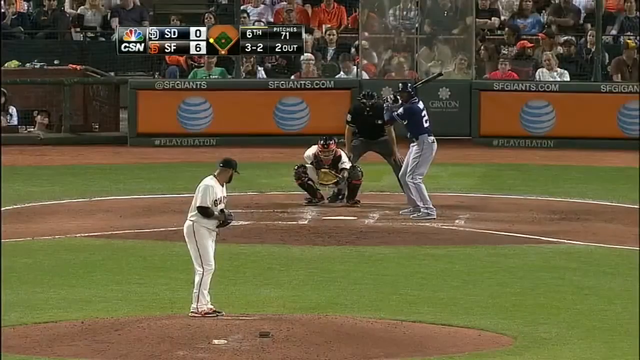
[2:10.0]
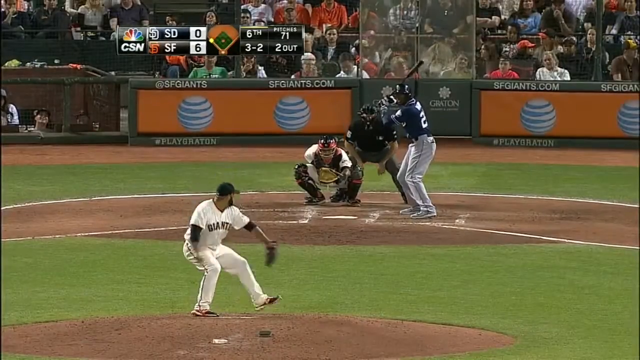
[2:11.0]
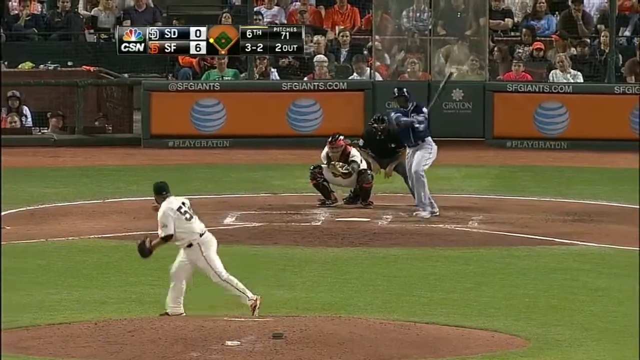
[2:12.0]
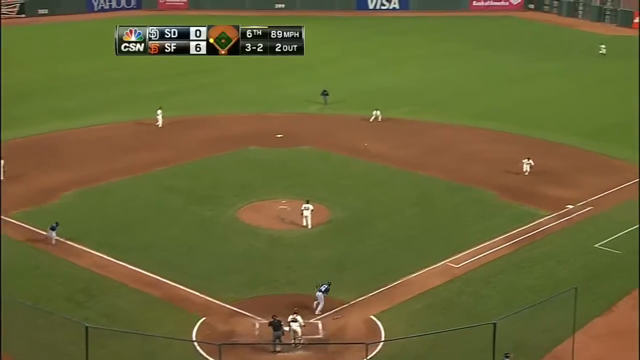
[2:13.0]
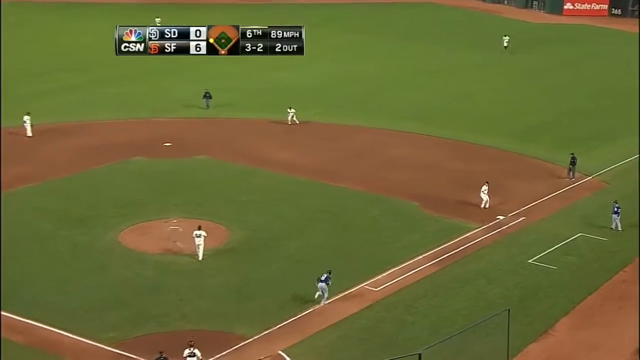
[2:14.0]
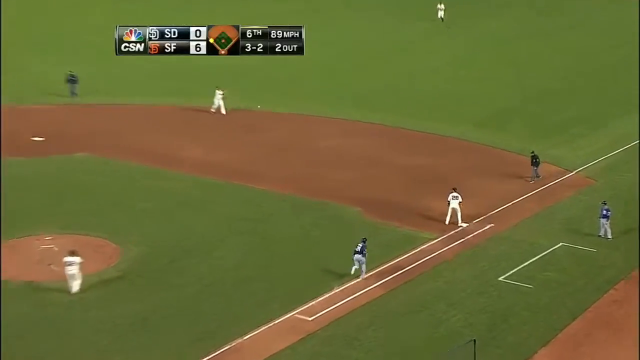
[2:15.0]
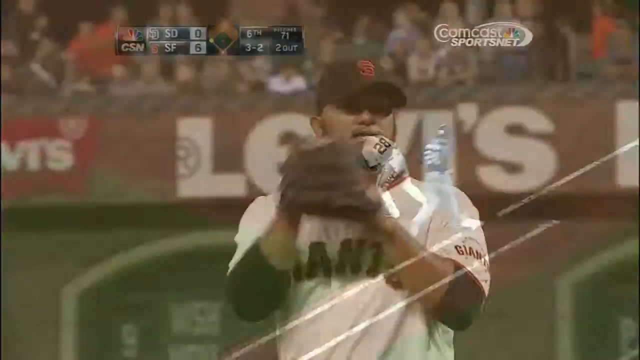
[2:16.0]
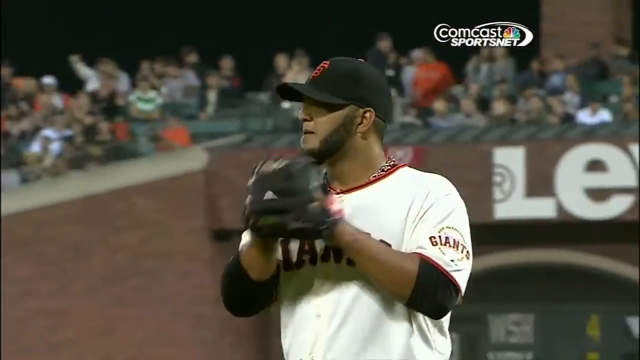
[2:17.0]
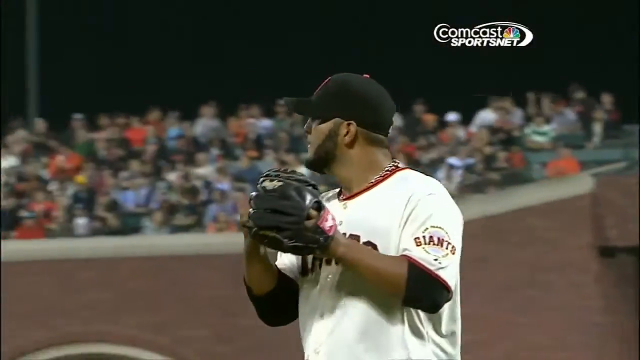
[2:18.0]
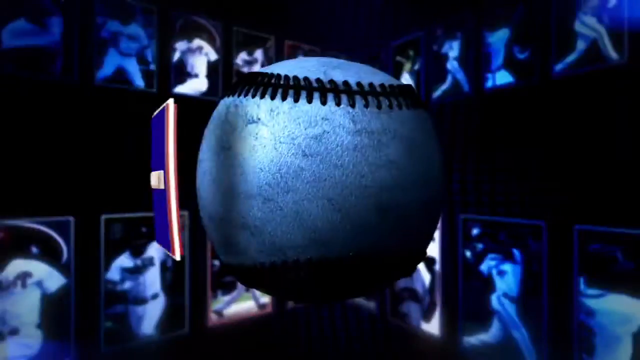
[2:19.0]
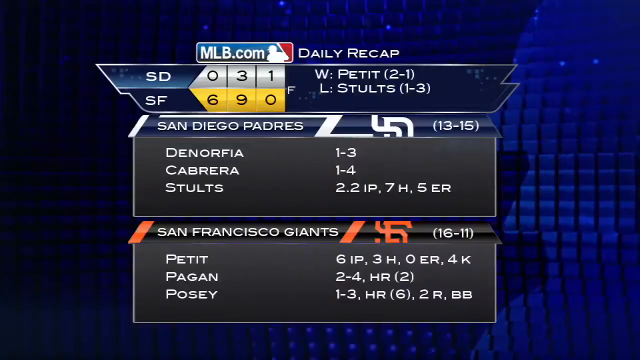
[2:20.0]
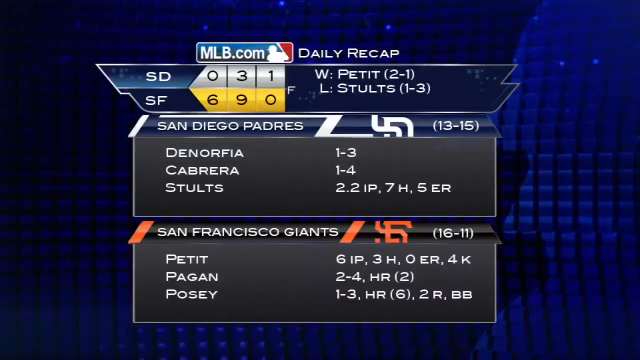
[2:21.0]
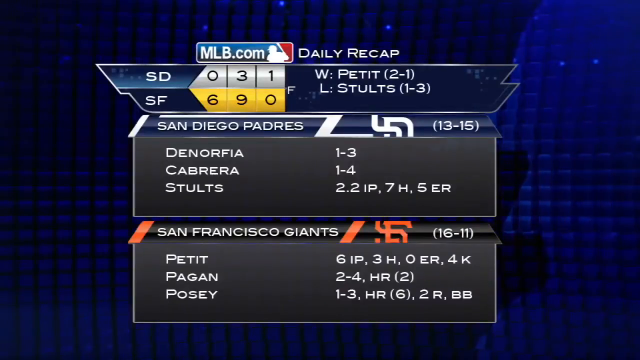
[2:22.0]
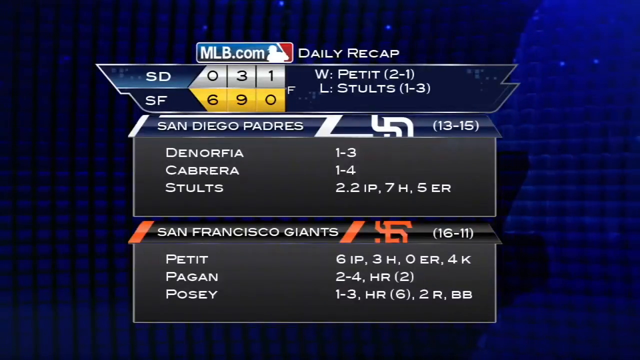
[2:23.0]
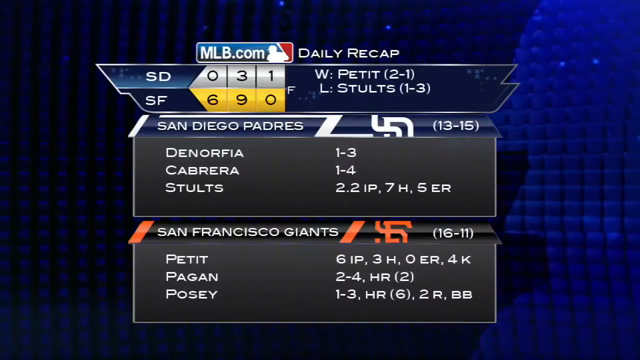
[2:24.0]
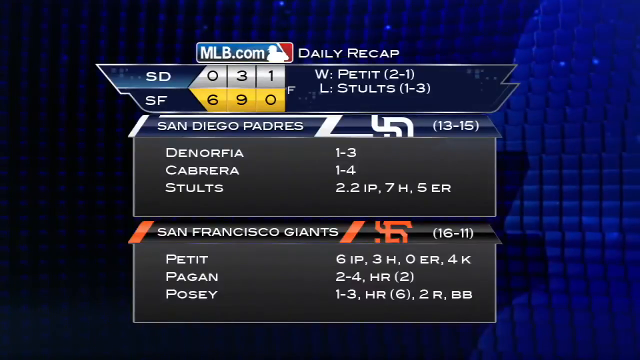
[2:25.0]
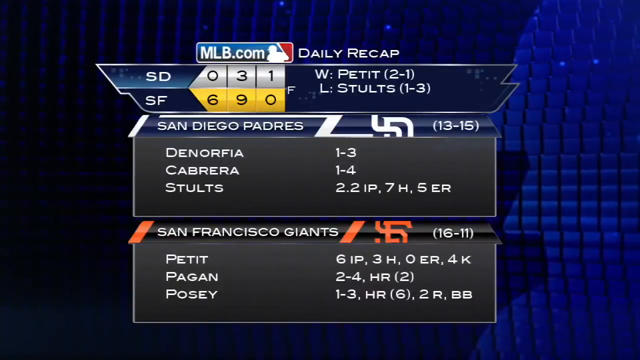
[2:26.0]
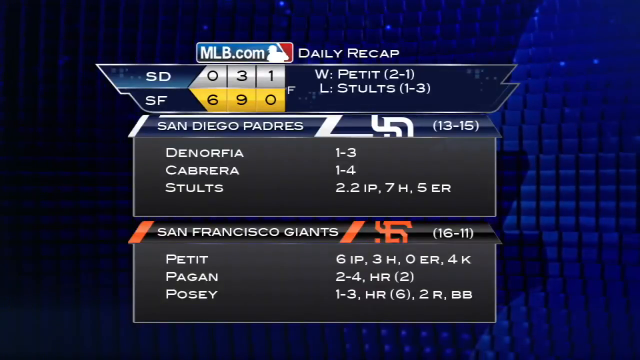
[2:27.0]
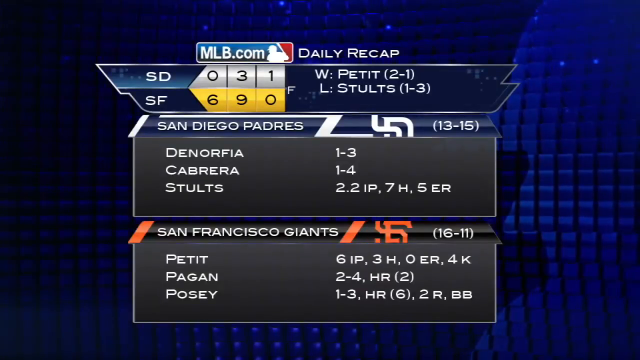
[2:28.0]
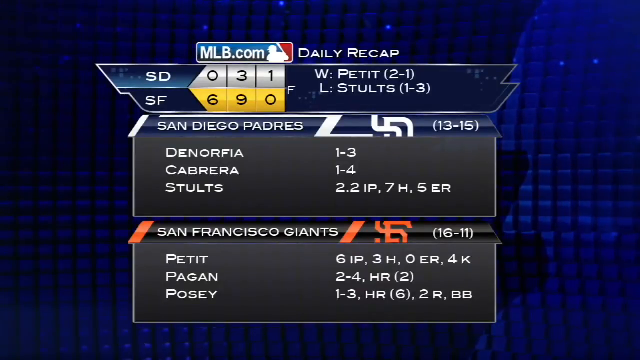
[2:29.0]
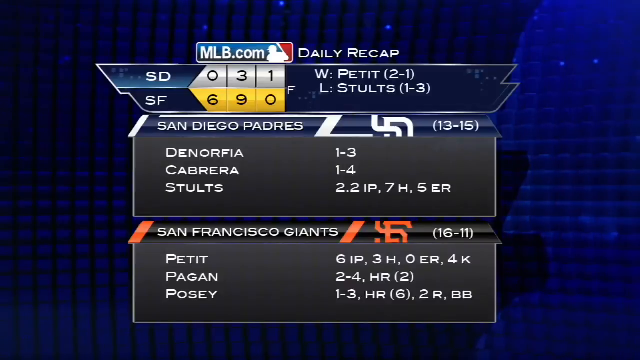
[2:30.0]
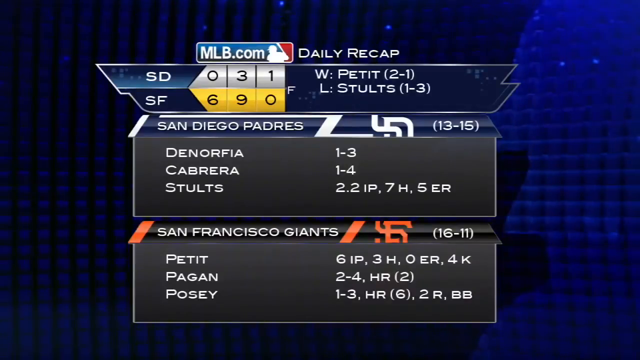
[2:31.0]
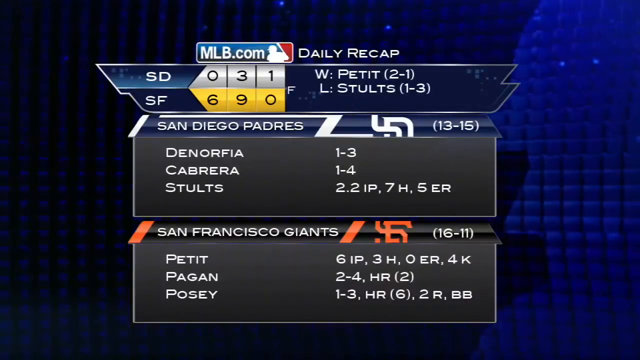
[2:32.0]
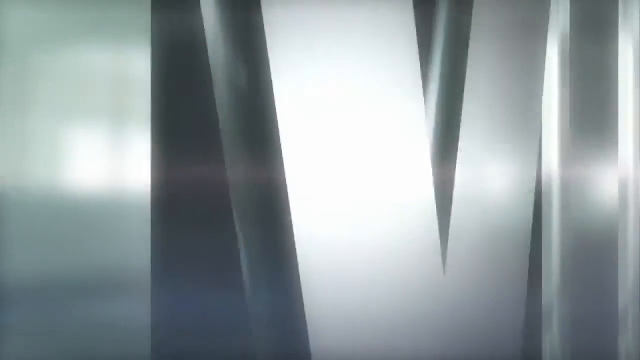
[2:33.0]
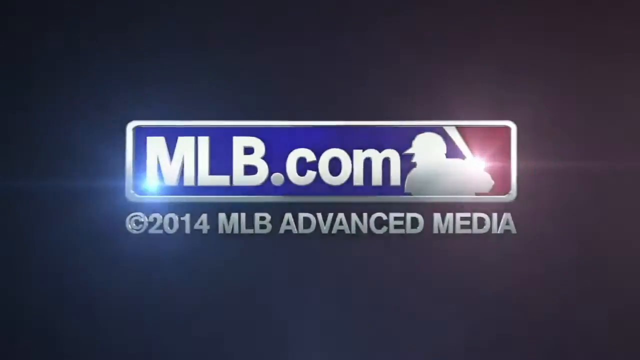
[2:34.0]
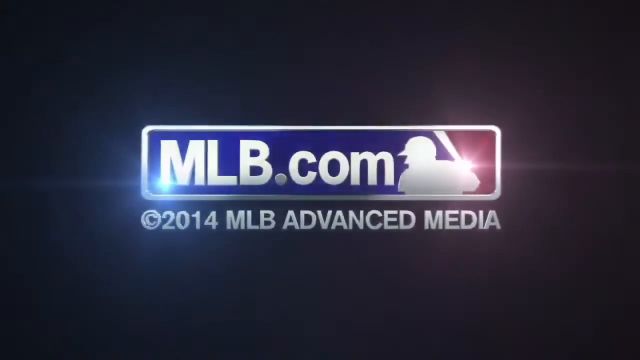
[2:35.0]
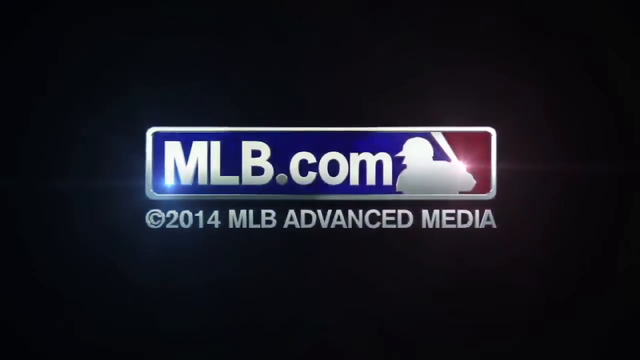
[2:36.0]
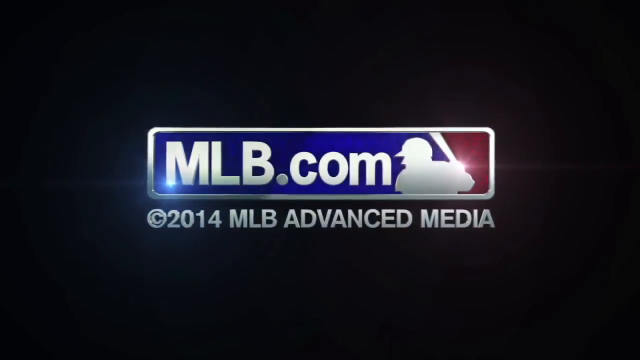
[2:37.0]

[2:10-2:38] In the top of the sixth inning, the score is San Diego 0, San Francisco 6. A right-handed pitcher for the San Francisco Giants faces a right-handed batter for the San Diego Padres, with three balls, two strikes, two outs, and a man on third. He winds up and pitches, and the batter hits the ball to the shortstop, who makes an easy play to first base to end the inning and the game. The final score is San Diego 0, San Francisco 6, with nine hits and no errors for San Francisco and three hits and one error for San Diego.